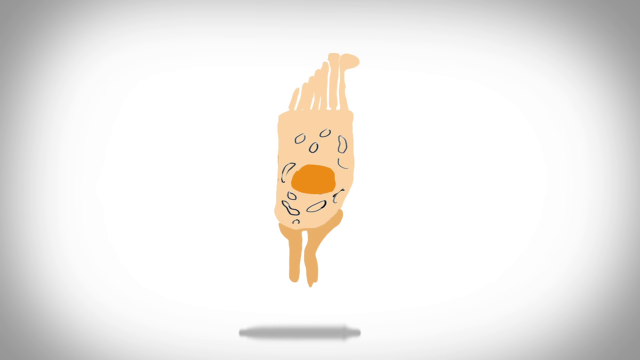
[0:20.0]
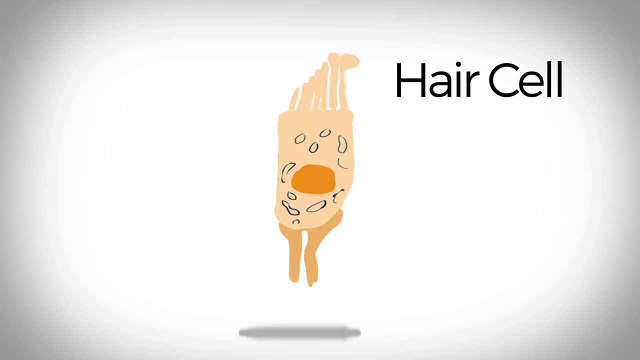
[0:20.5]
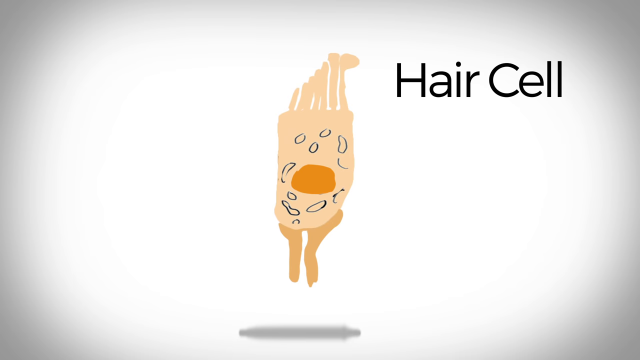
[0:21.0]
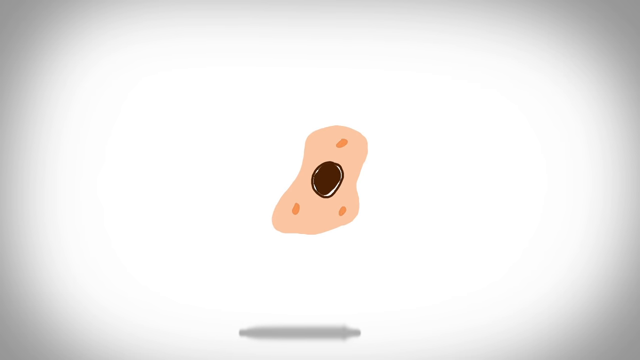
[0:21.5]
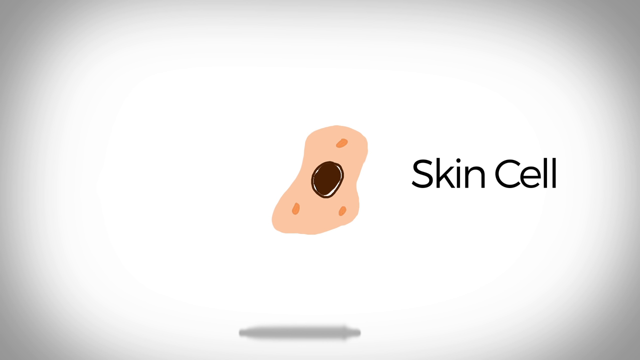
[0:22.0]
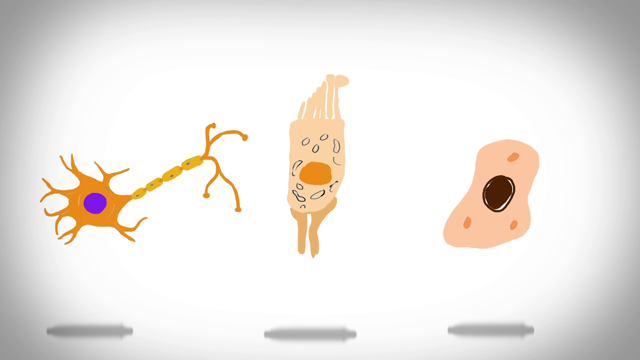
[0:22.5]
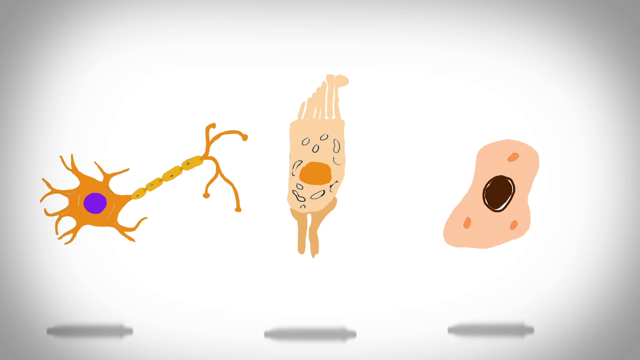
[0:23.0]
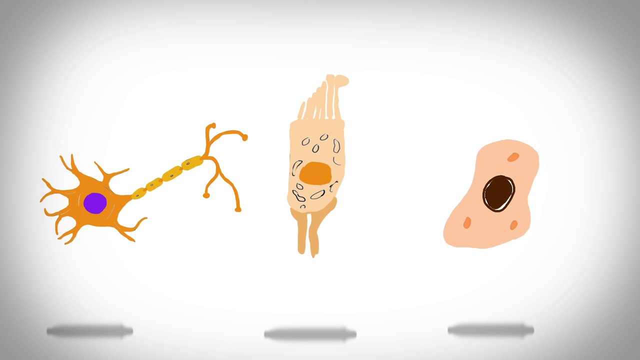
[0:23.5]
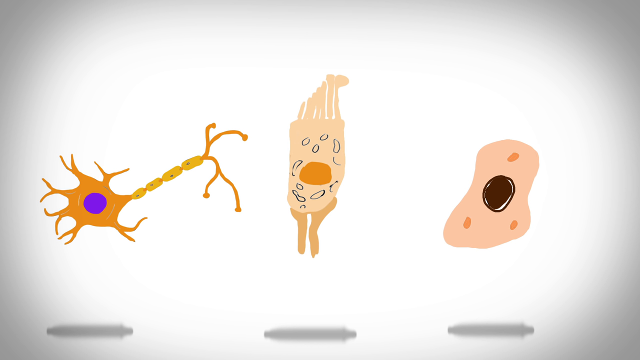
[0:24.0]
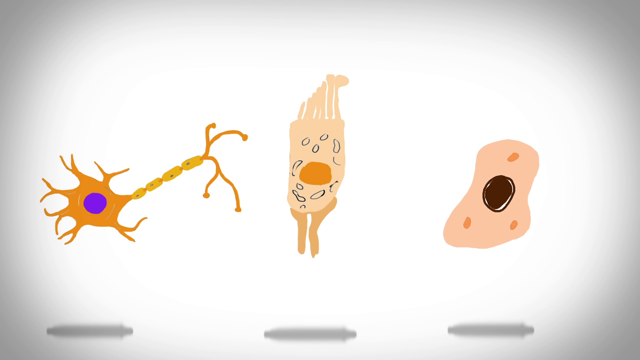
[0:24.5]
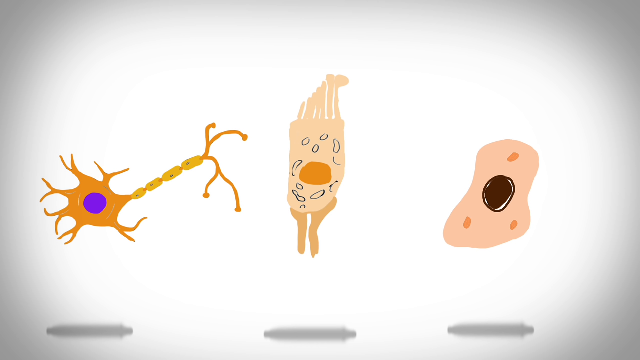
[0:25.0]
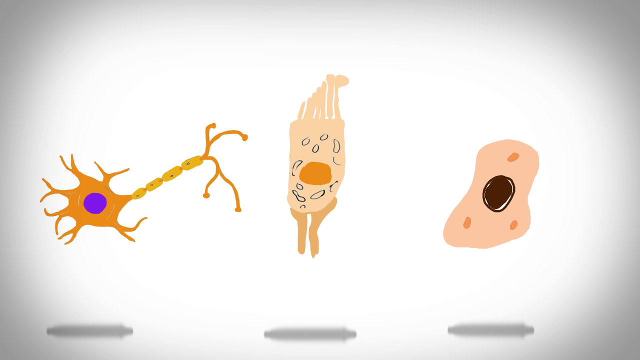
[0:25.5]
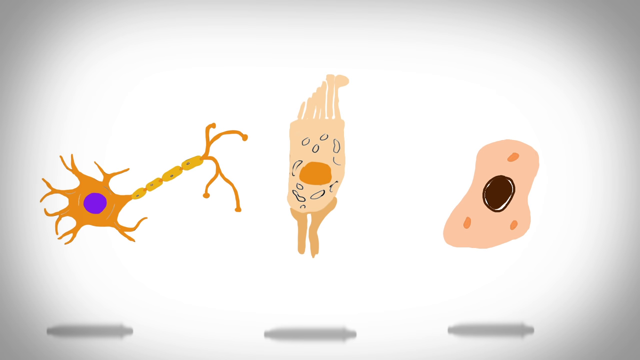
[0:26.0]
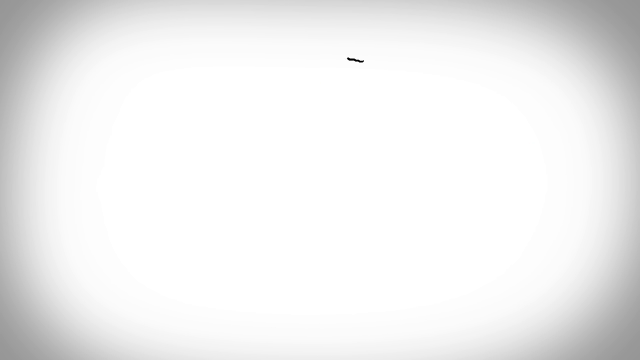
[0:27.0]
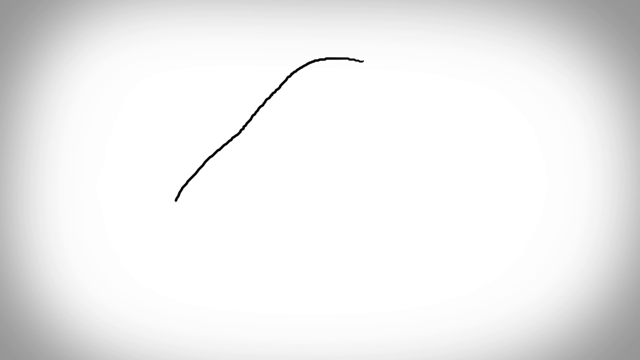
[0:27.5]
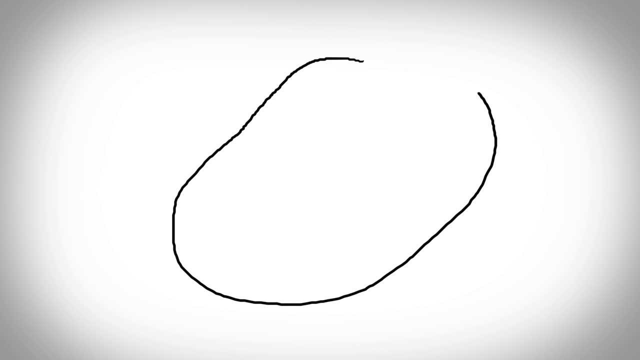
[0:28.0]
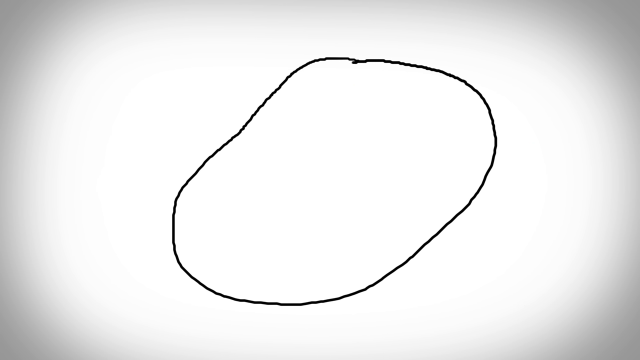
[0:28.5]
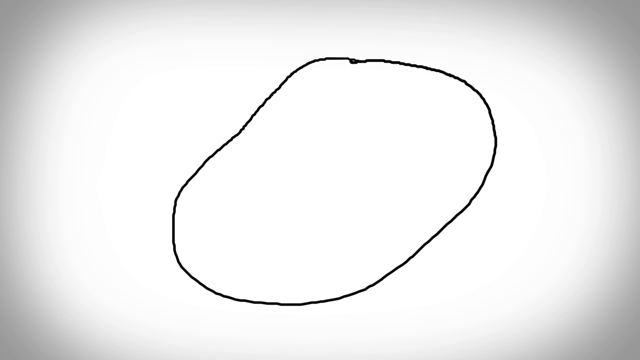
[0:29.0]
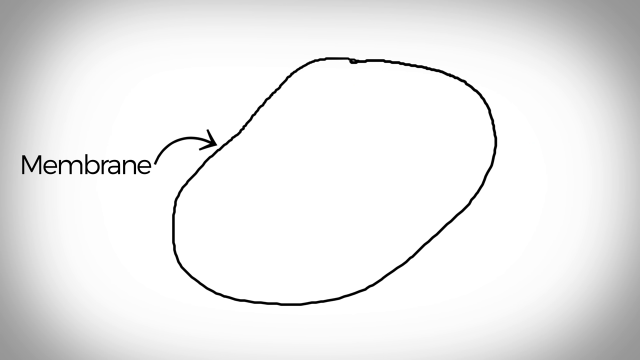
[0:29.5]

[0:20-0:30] A drawing of a hair cell appears on a white background. It looks like it has two little legs and things coming off the top, and it is flat on the top. To its right, "hair cell" is written in black letters. The view switches to a pink cell with three orange dots in it, one at the top and two at the bottom, and a black circle in the middle; to its right it says "skin cell". Three different cells are then shown: on the left, one that looks like a nerve cell, orange and yellow with a purple dot in it; in the middle, a hair cell; and on the right, a skin cell. An oblong circle is drawn in the middle of the screen, the word "membrane" comes up beside it, and an arrow points to the circle. A nerve cell, a skin cell and a hair cell are then shown.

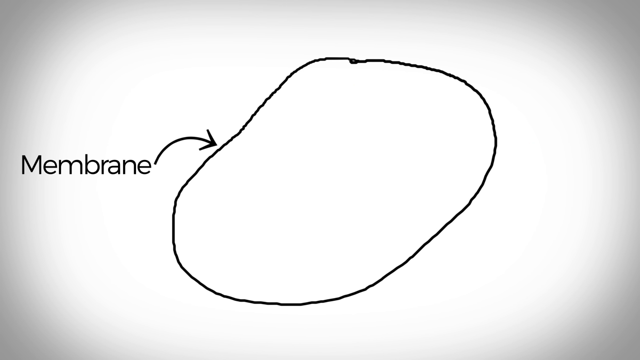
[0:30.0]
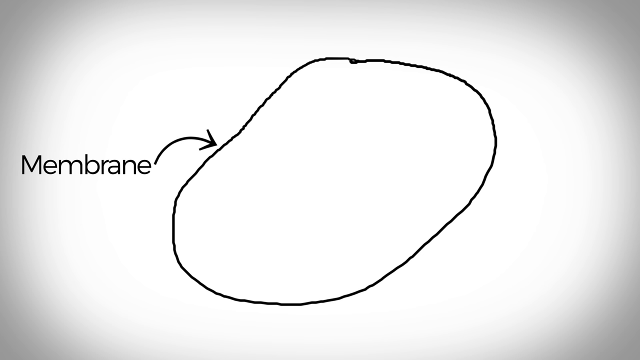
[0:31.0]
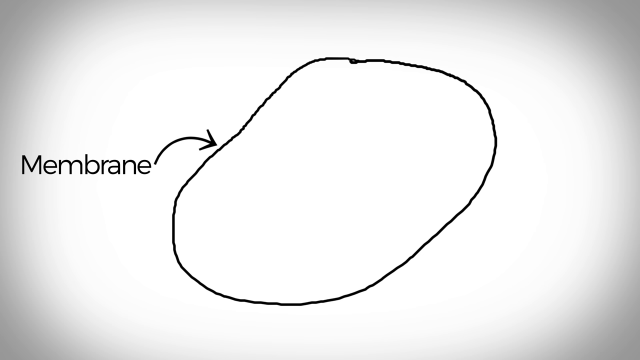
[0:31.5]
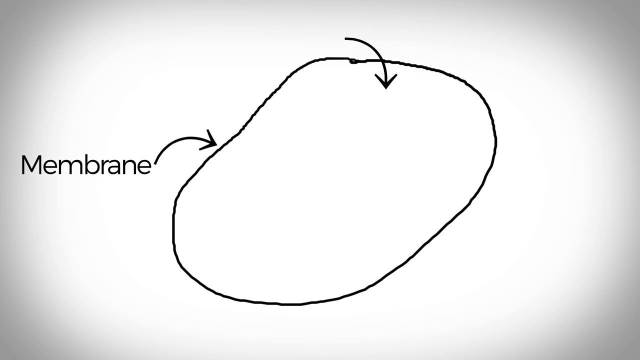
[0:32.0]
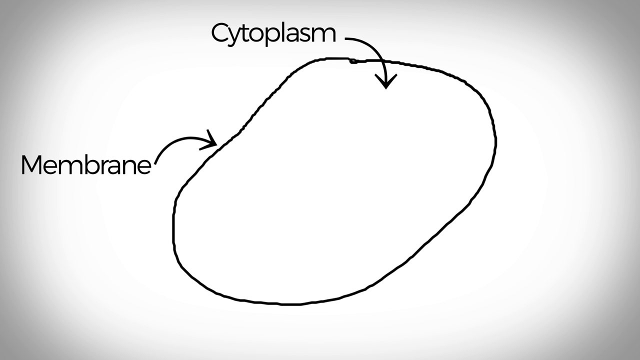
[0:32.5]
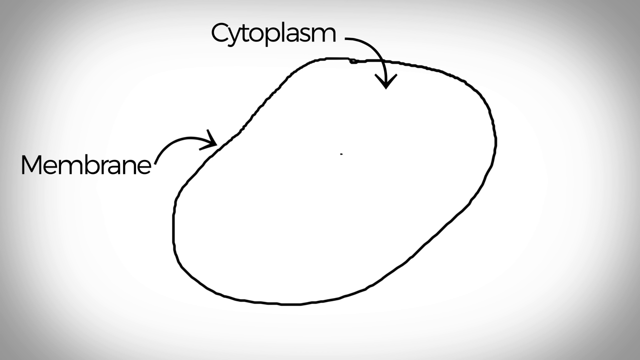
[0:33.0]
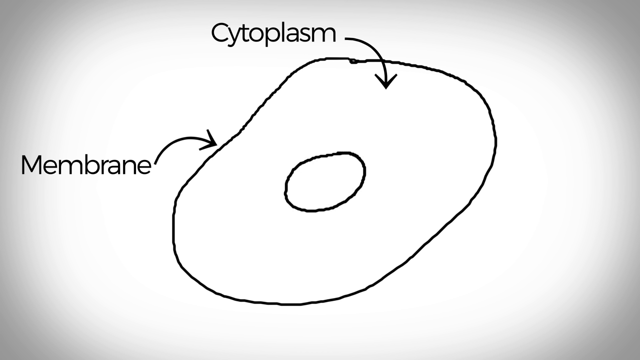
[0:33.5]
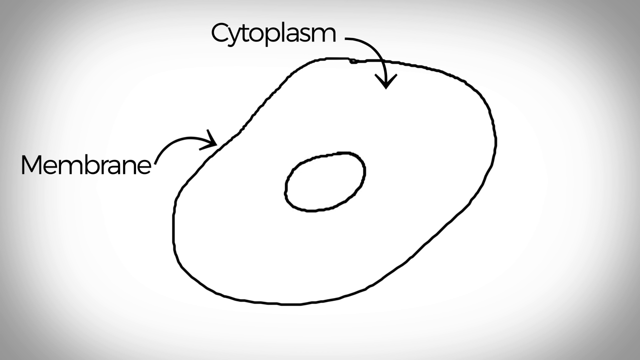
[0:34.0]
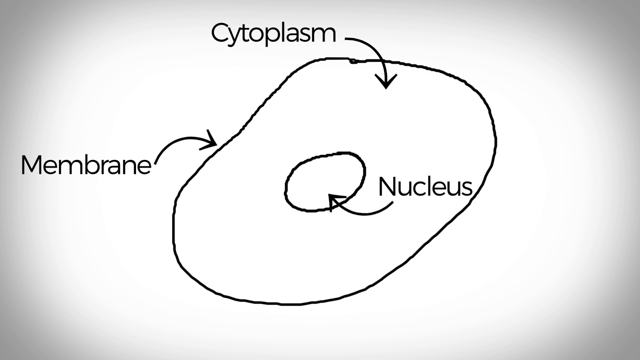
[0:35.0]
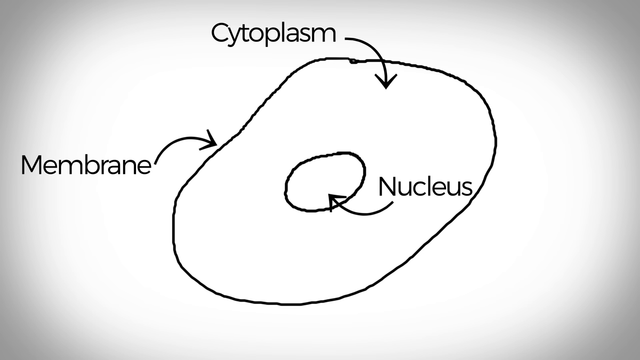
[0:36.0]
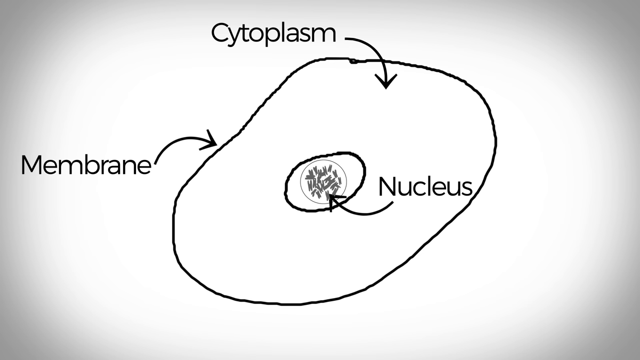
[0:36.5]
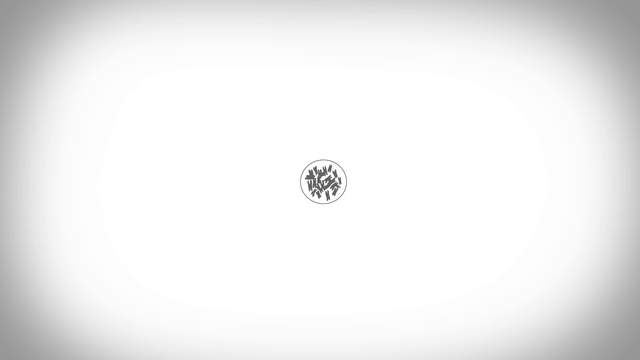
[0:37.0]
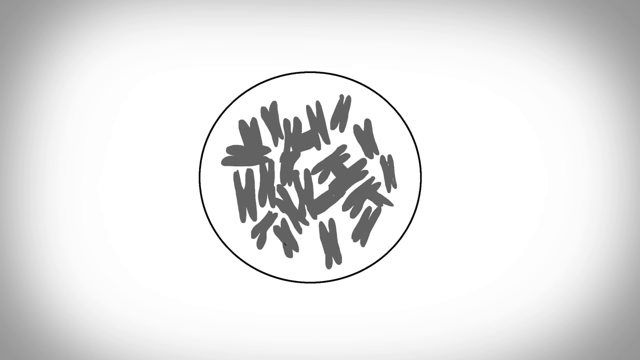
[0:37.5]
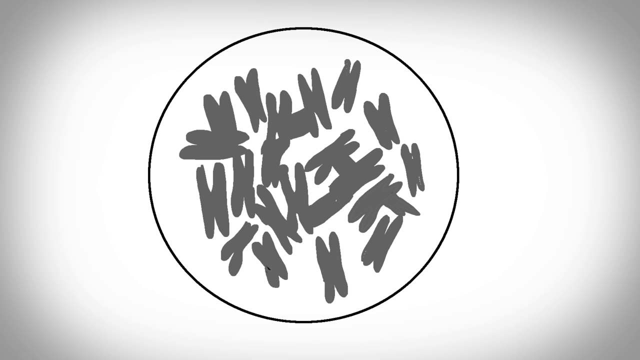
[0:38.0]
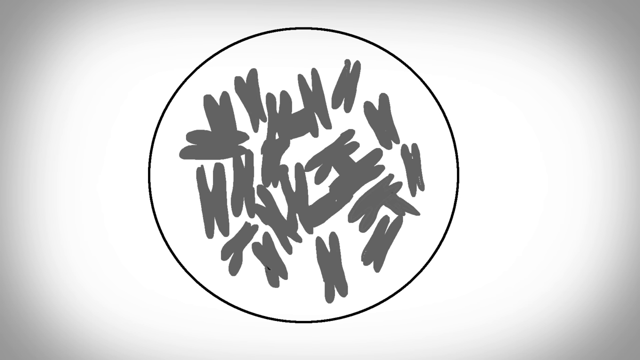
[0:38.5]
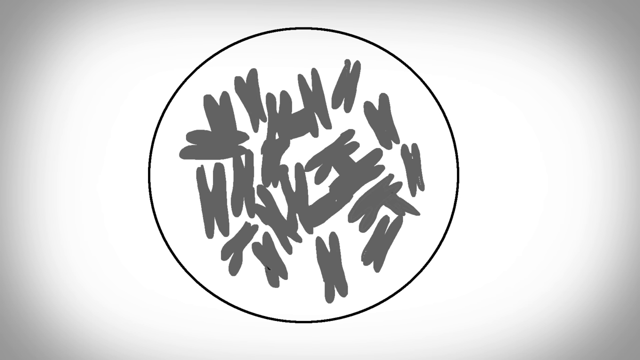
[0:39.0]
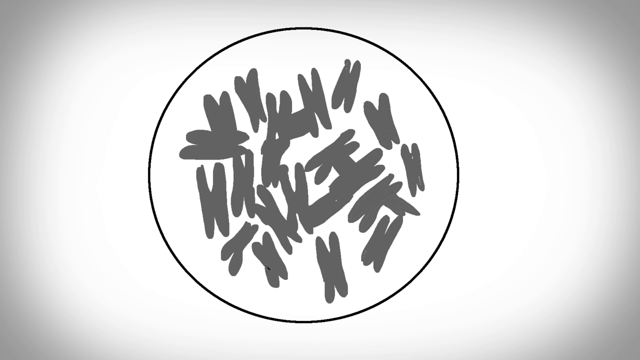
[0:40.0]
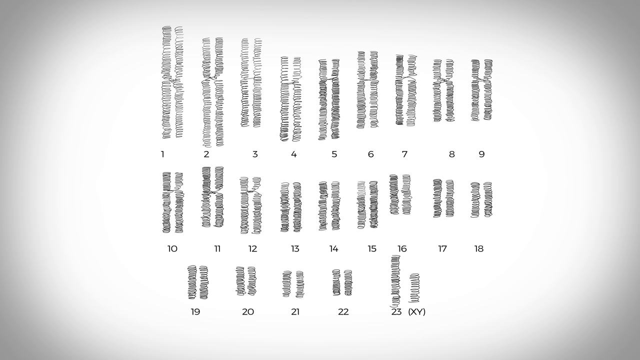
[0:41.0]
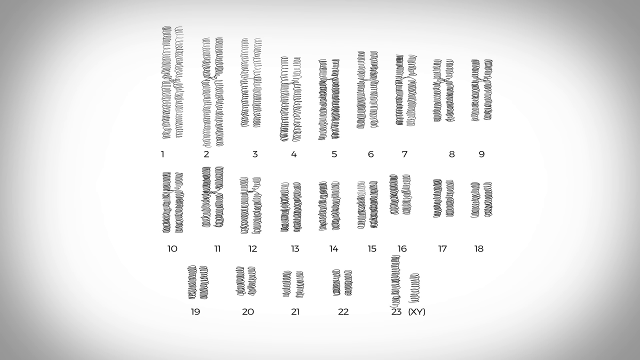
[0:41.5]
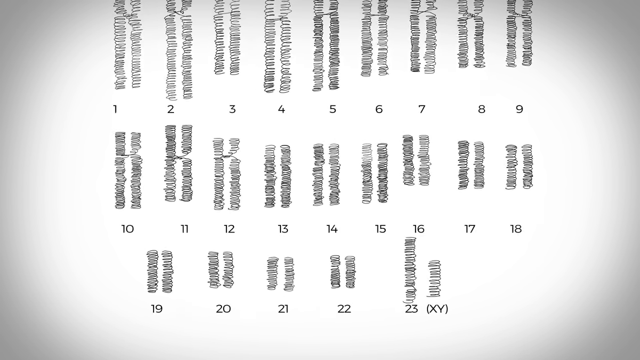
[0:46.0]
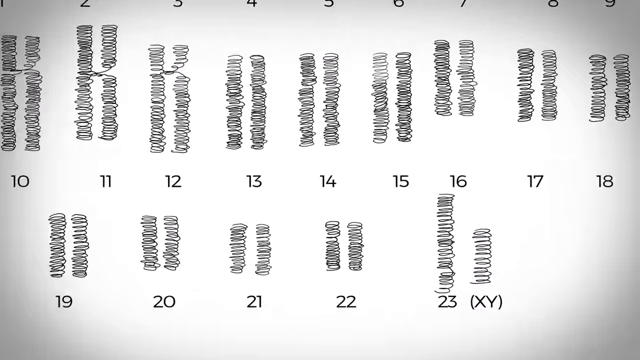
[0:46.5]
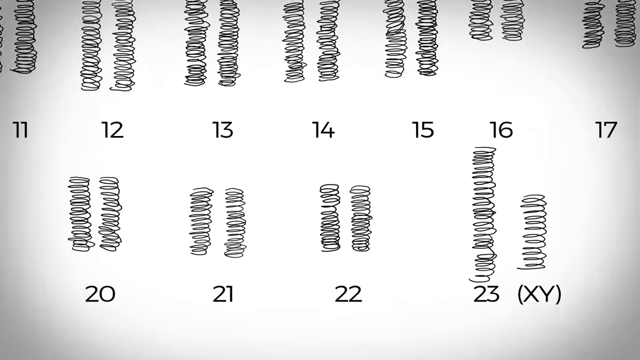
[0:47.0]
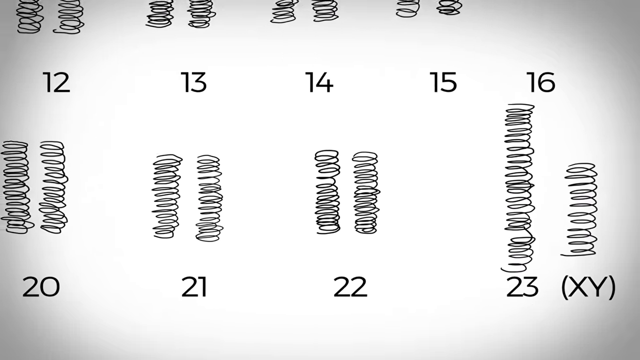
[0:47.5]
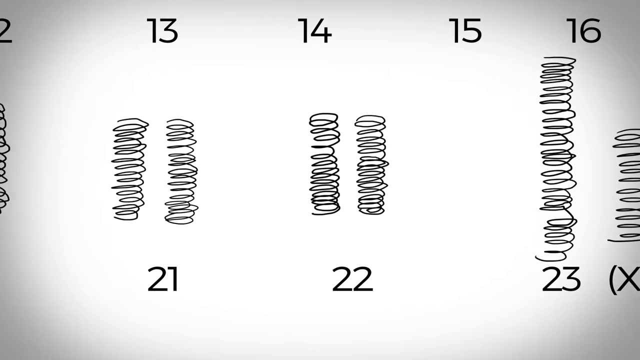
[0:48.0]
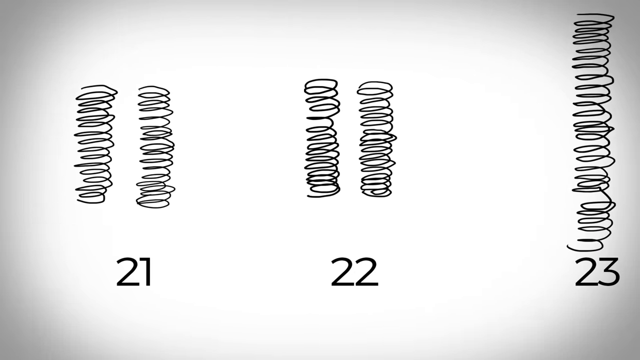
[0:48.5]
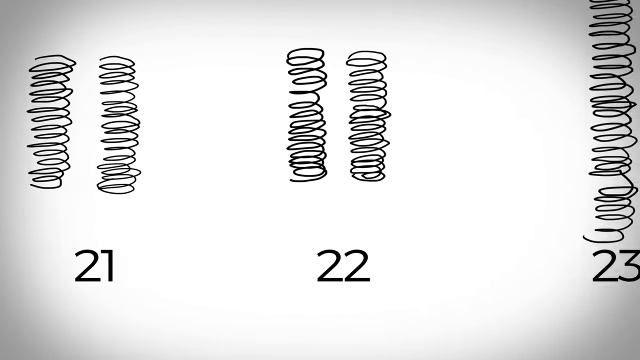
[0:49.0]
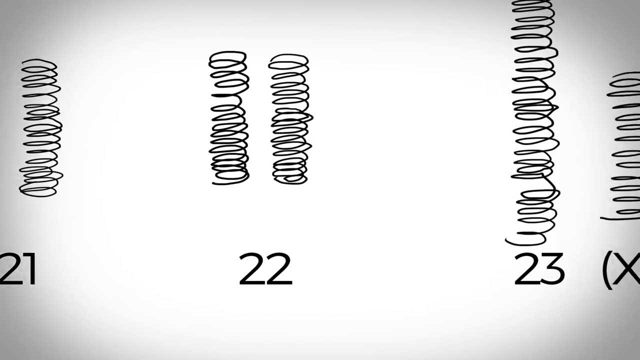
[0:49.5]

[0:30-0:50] On a white screen, a line is drawn into an imperfect circle. On the left side of the line is the word "membrane", with an arrow that curves up and around into the side of the cell, pointing to the membrane. Another arrow at the top curves down and points to the inside of the cell, labeled "cytoplasm". A circle is drawn in the middle, the word "nucleus" appears to the right of it, and an arrow from underneath the end of "nucleus" curves down and up to point to the circle. Another circle appears in the middle with a bunch of lines together inside it; it gets big until it is the only thing on the screen. Then many pairs of lines are shown in three rows running from left to right, numbered 1 through 9, 10 through 18, and 19 through 23. The view zooms in on number 22 and shows 23.